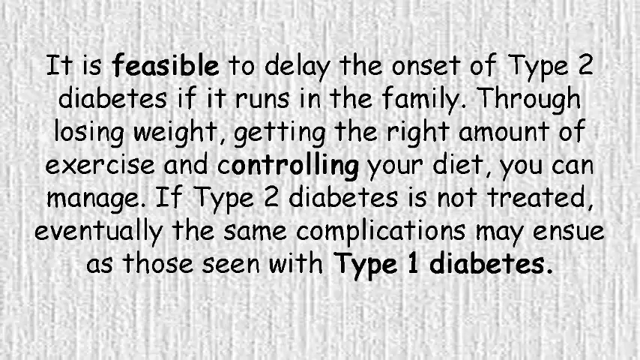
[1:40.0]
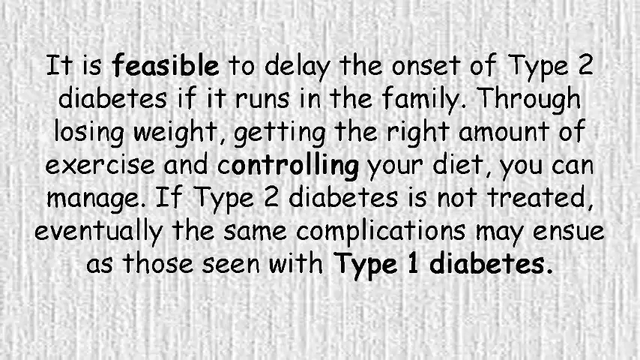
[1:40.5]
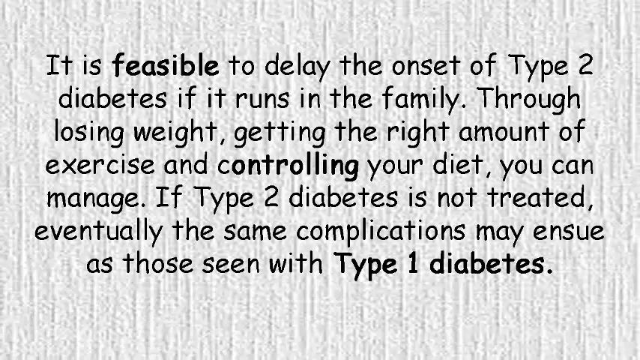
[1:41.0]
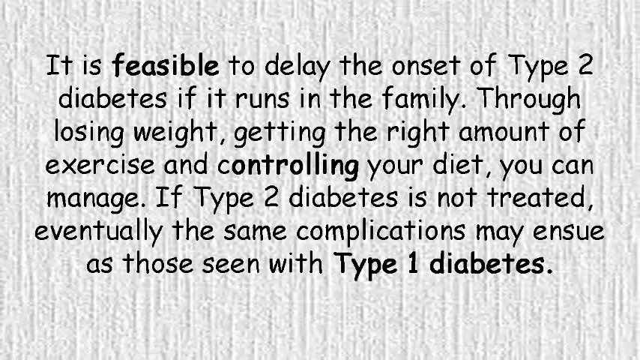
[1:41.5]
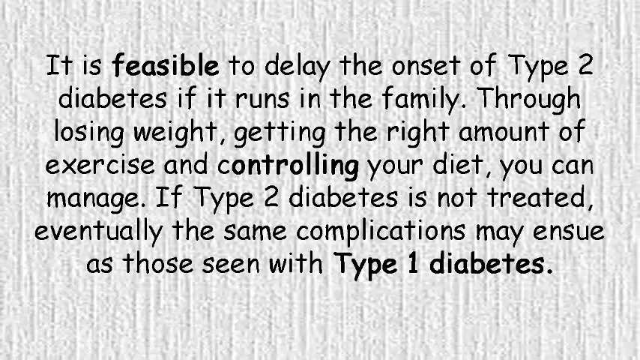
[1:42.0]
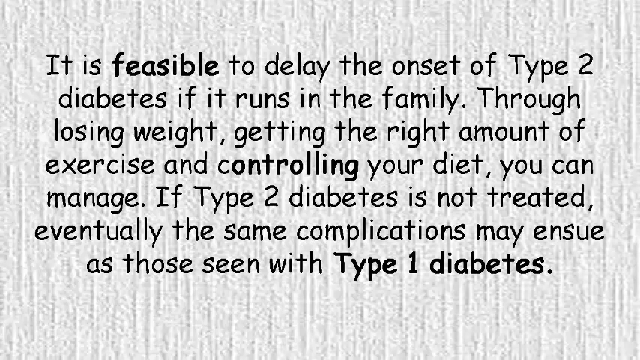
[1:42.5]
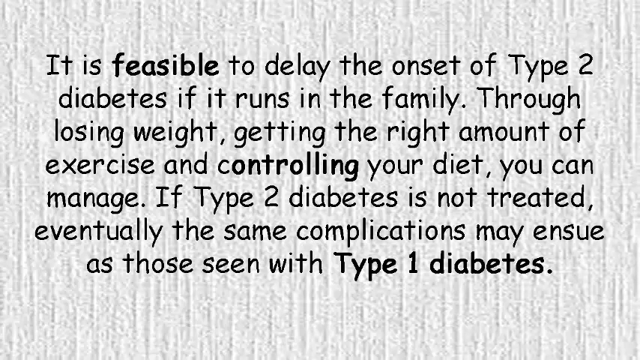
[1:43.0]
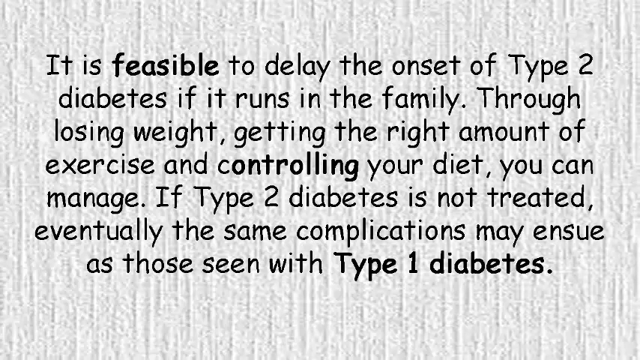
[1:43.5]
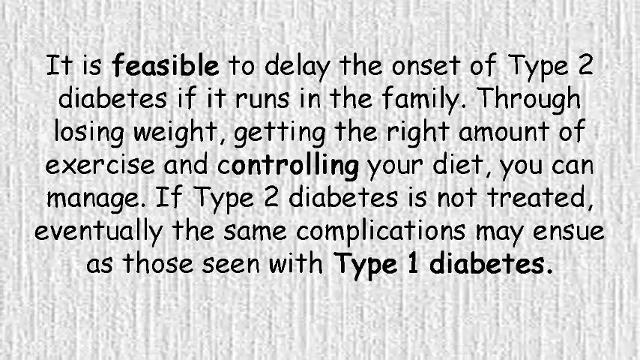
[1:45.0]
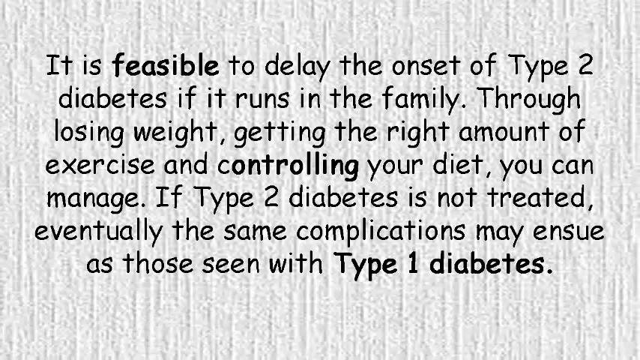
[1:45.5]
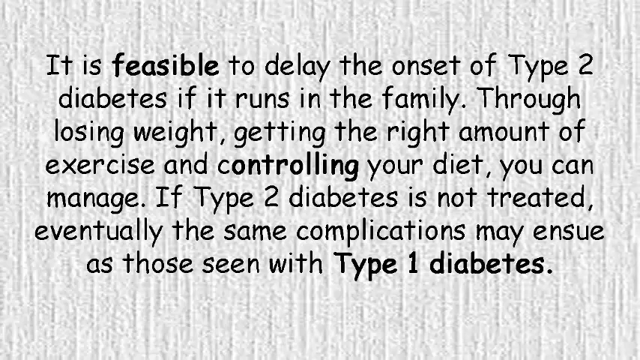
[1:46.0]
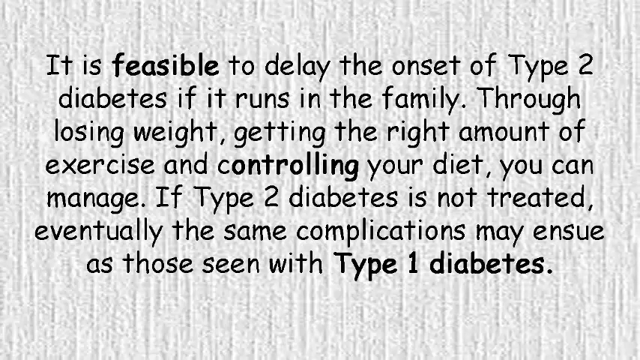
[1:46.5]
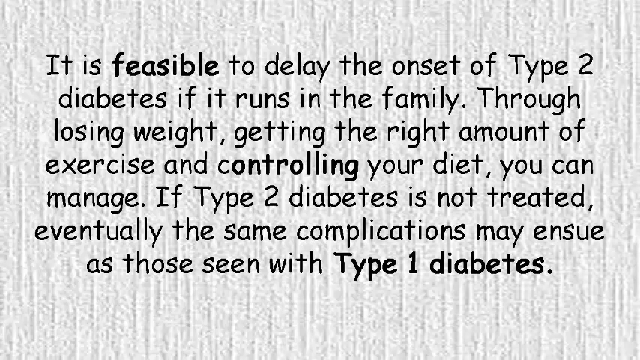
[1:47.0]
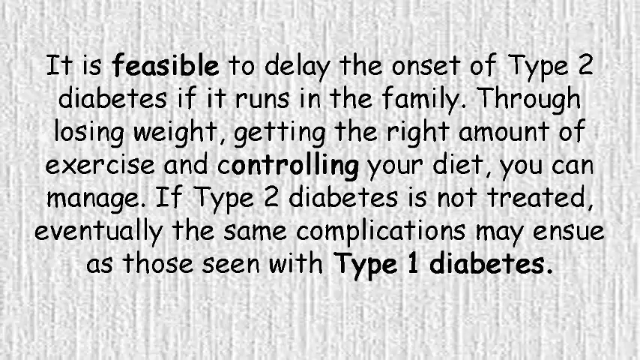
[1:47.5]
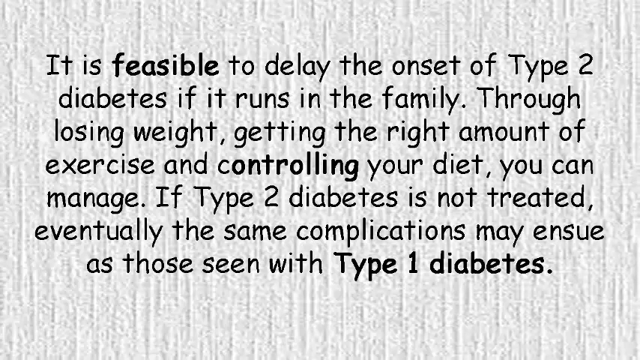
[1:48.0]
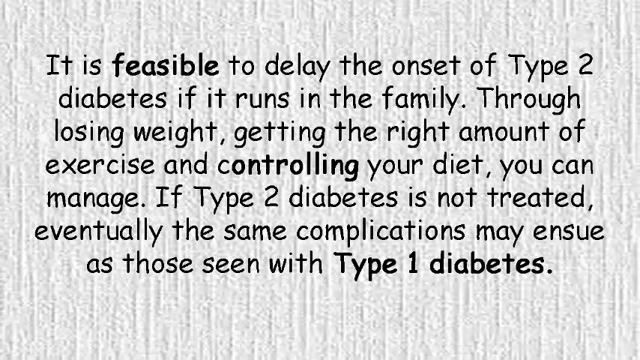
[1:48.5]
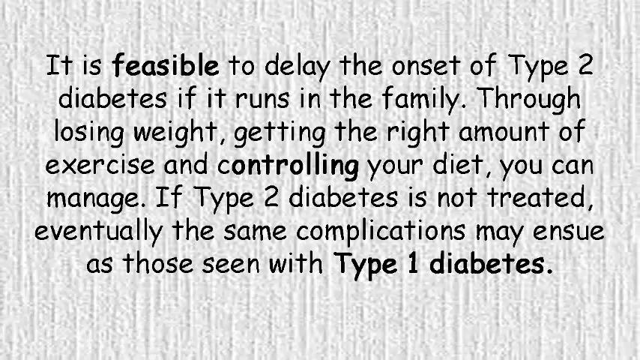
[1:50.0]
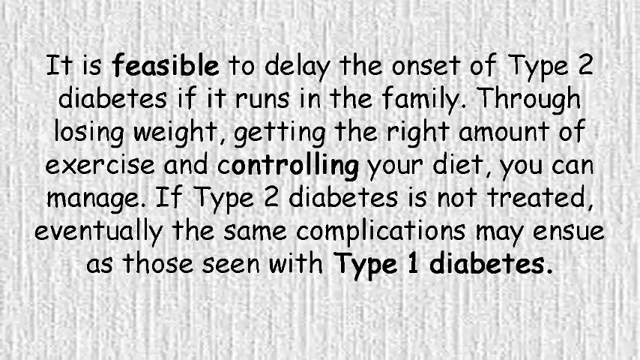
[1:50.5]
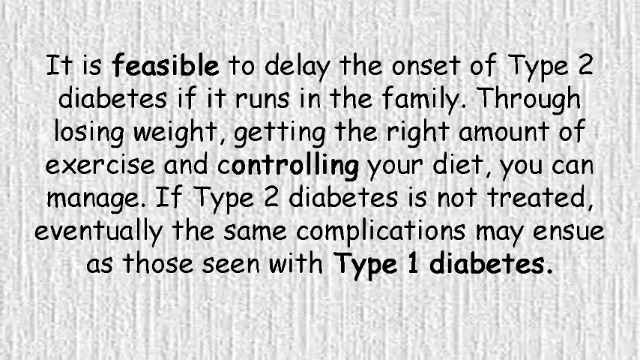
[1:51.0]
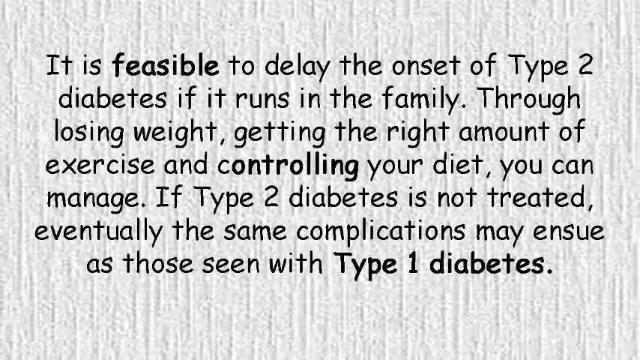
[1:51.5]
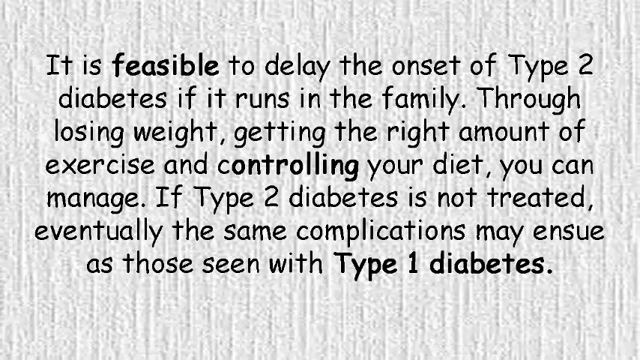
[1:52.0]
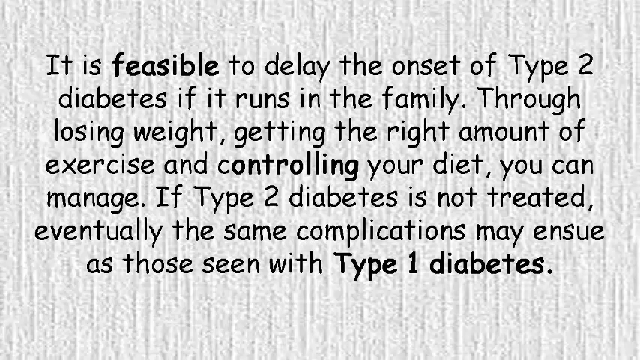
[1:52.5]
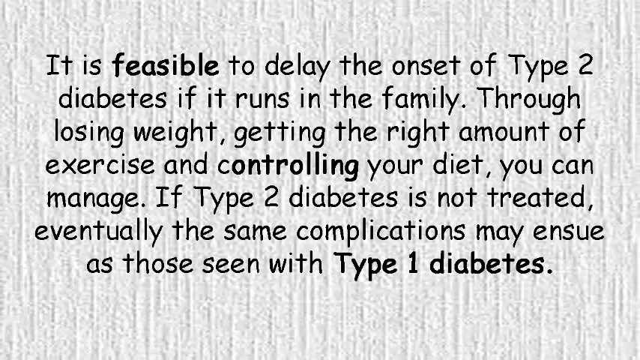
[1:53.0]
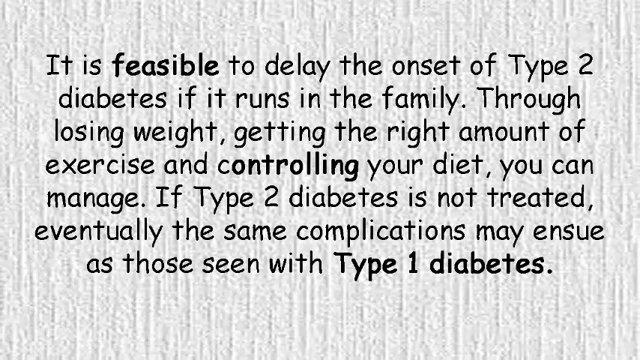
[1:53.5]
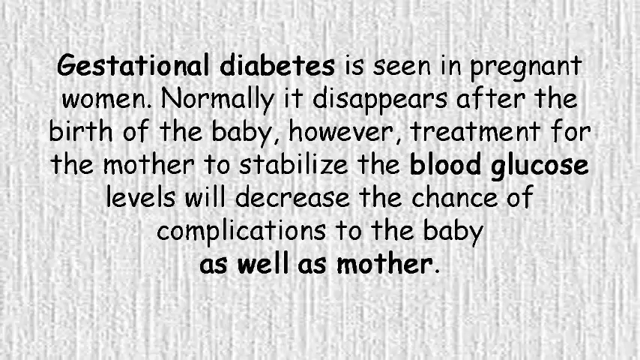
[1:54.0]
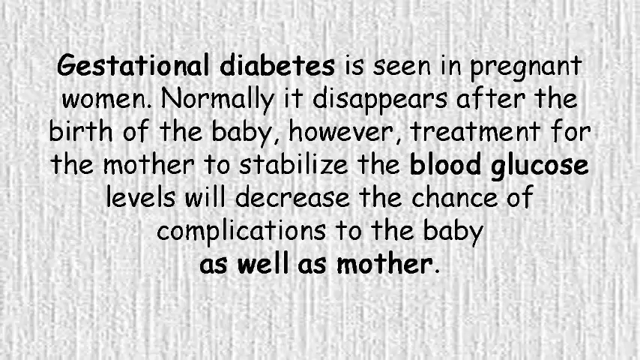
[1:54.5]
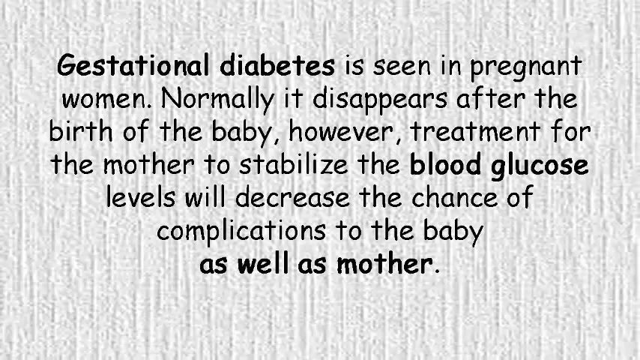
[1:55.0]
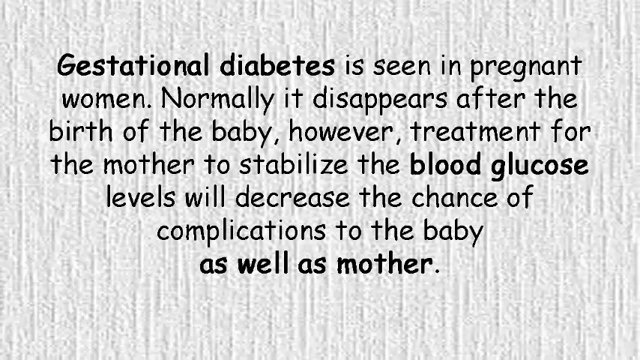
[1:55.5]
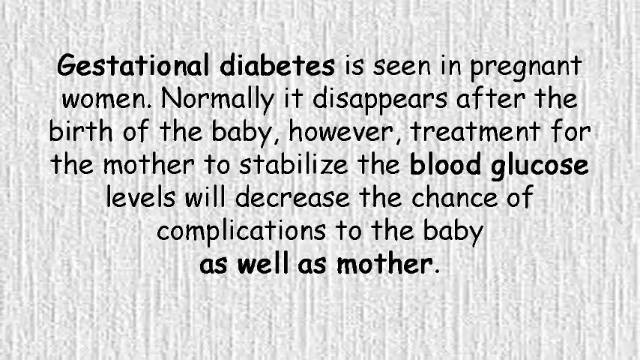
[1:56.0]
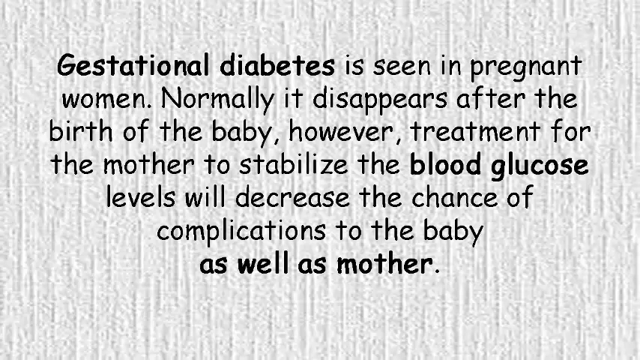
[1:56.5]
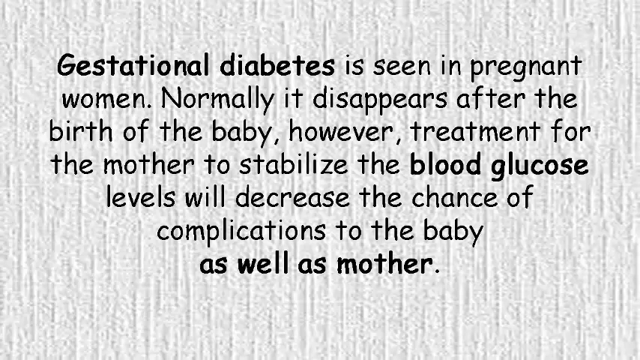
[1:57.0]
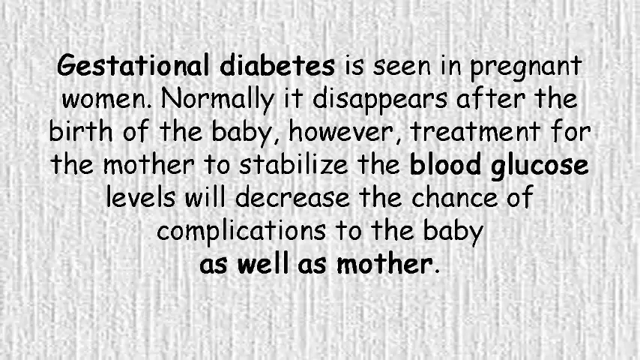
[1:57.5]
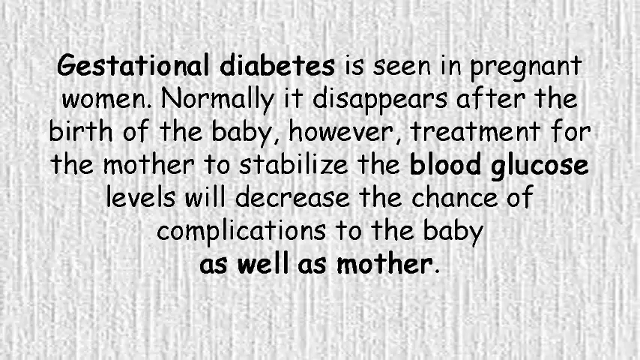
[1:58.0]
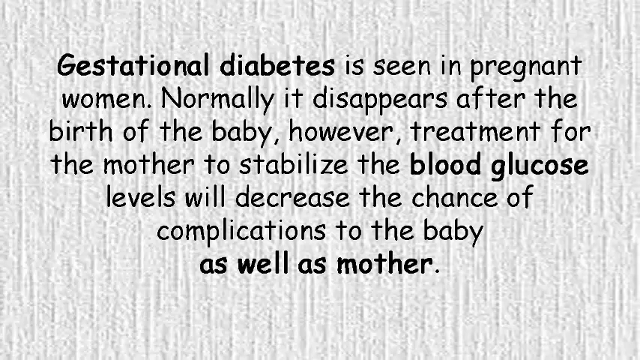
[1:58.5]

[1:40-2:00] A paragraph reads: "It is feasible to delay the onset of type two diabetes", continuing about losing weight, getting the right amount of exercise and controlling your diet, and ending "eventually the same complications may ensue as those seen in type one diabetes." The words "feasible", "controlling" and "type one diabetes" are in bold. The next paragraph reads: "Gestational diabetes is seen in pregnant women. Normally, it disappears after the birth of a baby. However, treatment for the mother to stabilize the blood glucose levels will decrease the chance of complications to the baby as well as mother." The words "gestational diabetes", "blood glucose" and "as well as mother" are in bold.